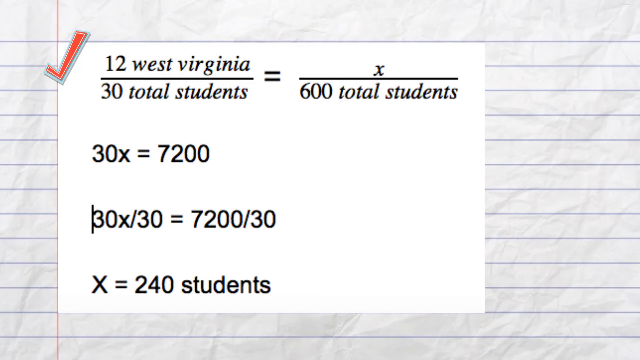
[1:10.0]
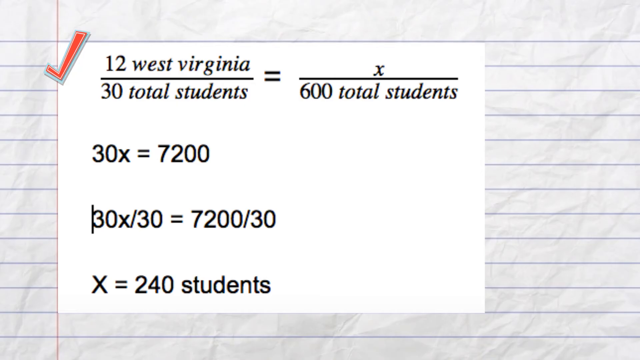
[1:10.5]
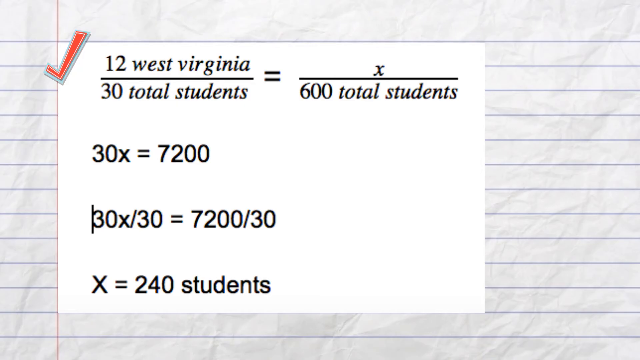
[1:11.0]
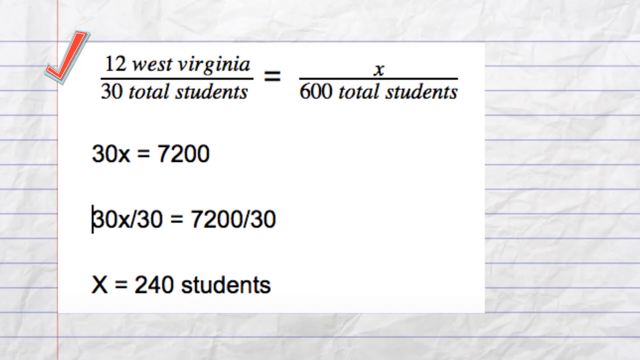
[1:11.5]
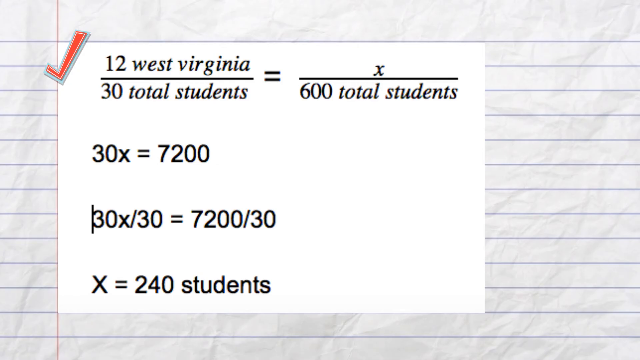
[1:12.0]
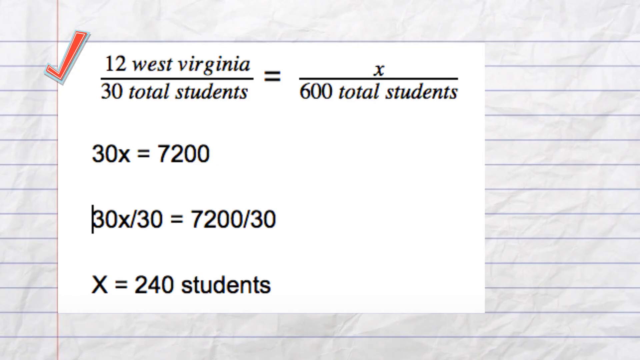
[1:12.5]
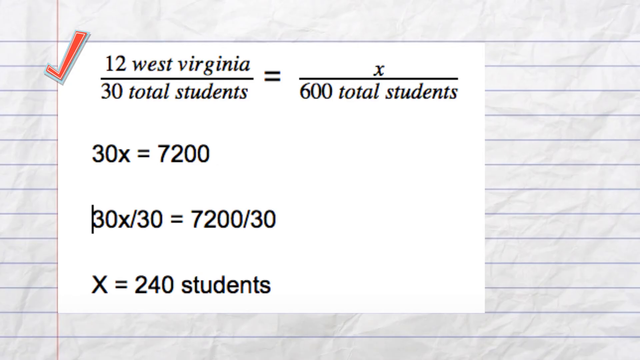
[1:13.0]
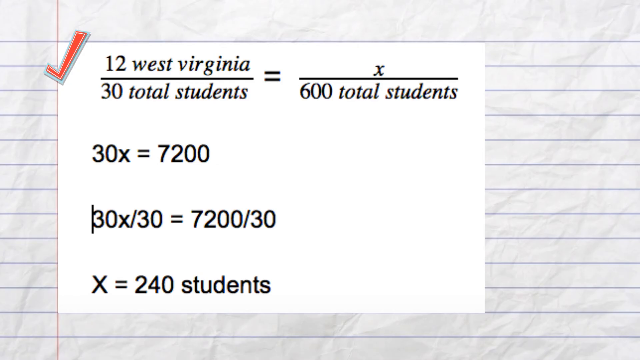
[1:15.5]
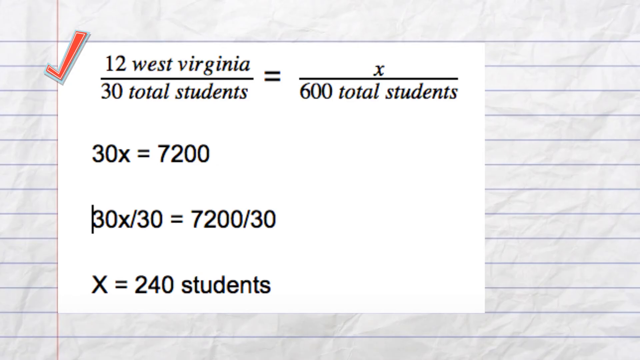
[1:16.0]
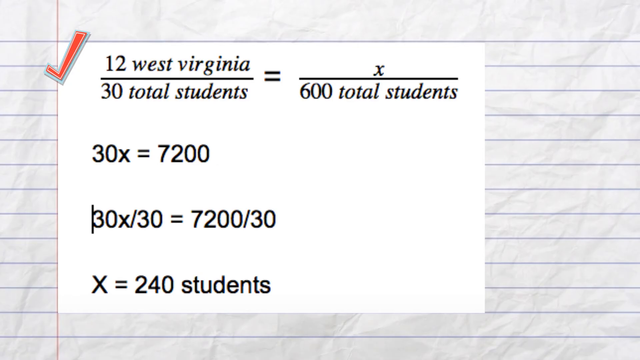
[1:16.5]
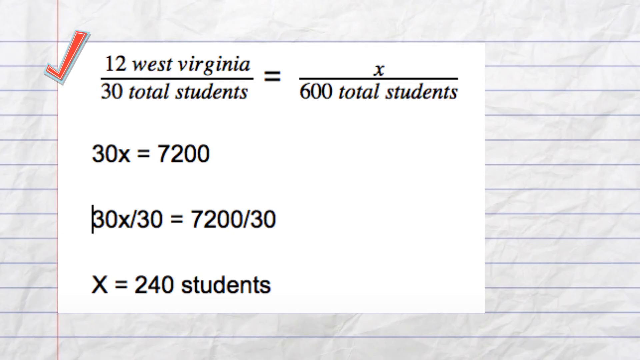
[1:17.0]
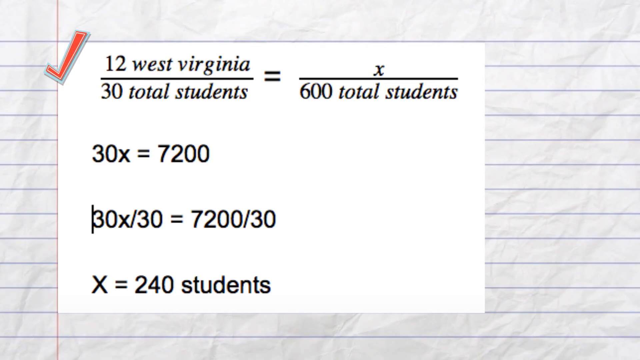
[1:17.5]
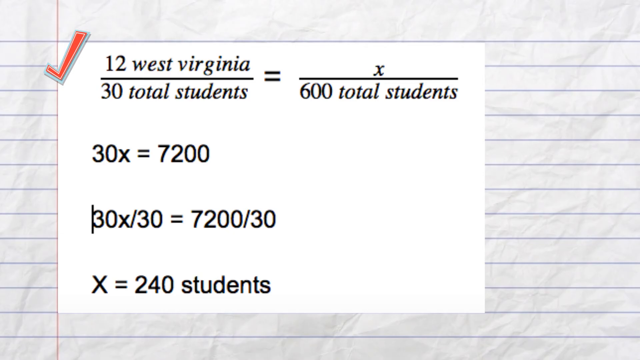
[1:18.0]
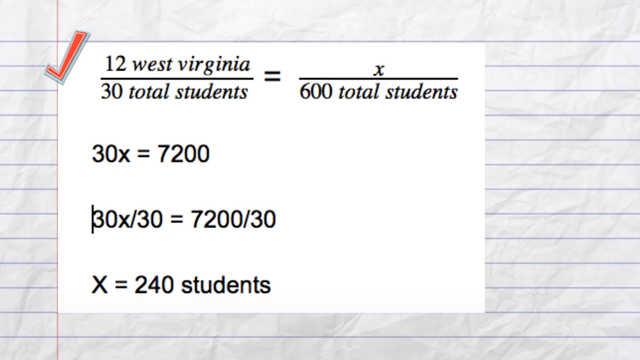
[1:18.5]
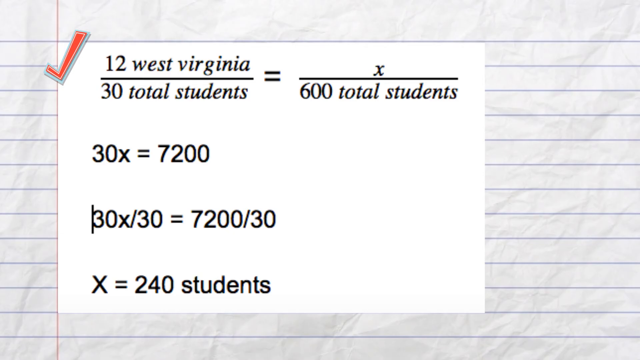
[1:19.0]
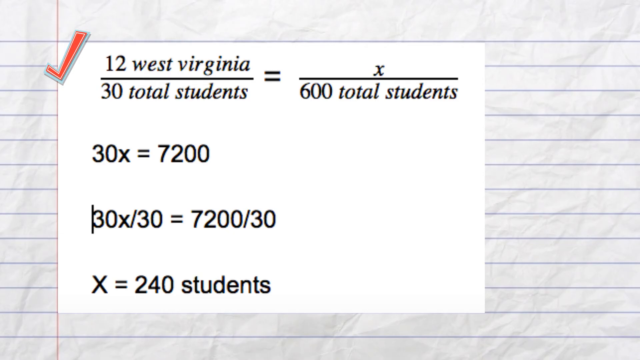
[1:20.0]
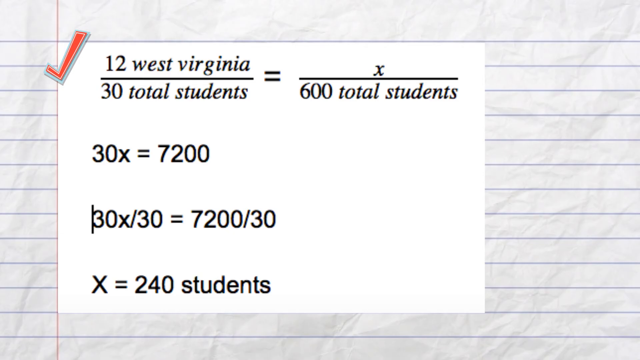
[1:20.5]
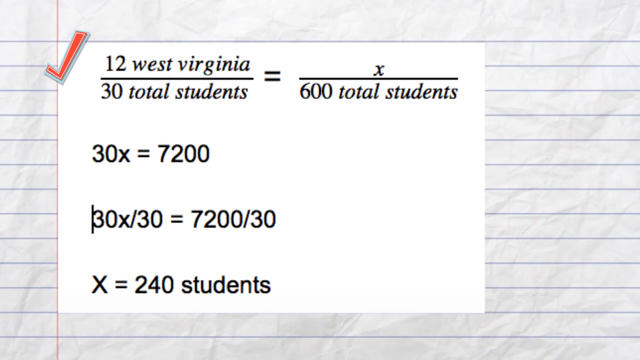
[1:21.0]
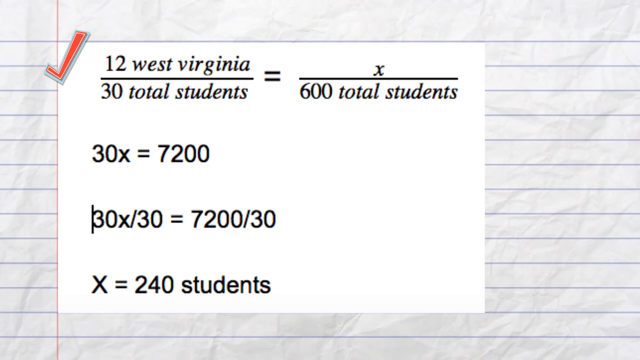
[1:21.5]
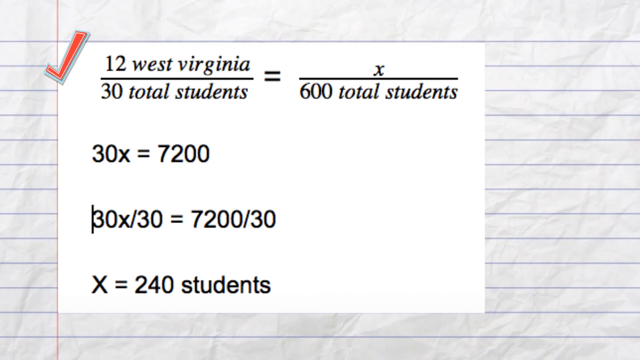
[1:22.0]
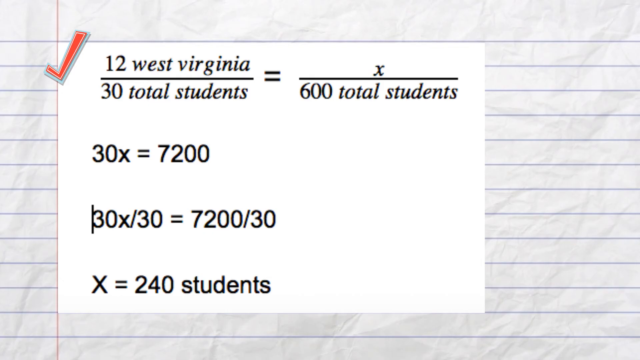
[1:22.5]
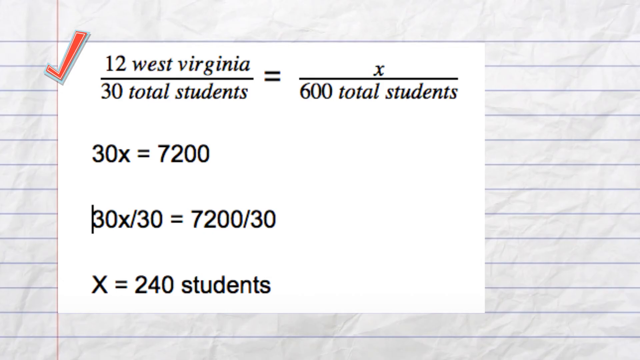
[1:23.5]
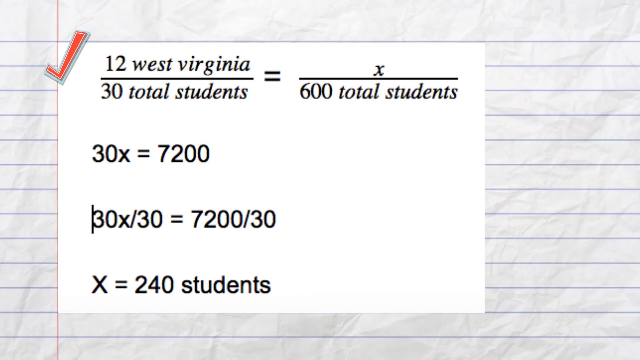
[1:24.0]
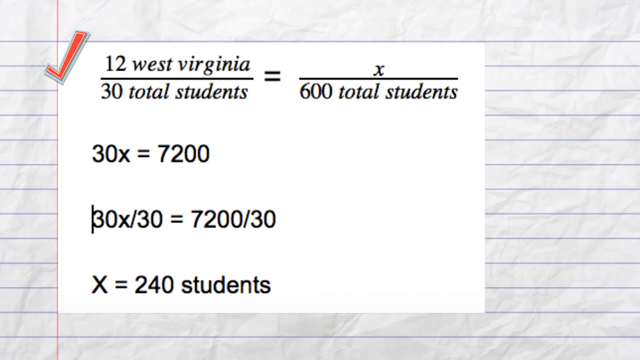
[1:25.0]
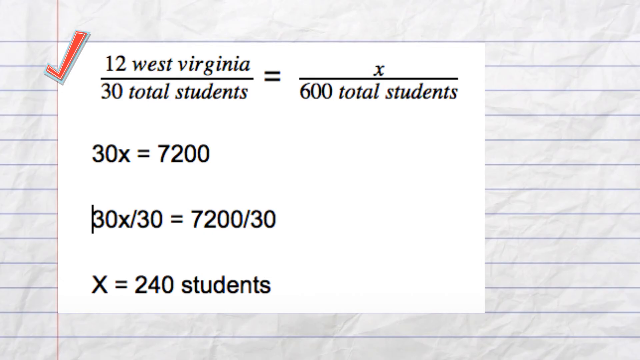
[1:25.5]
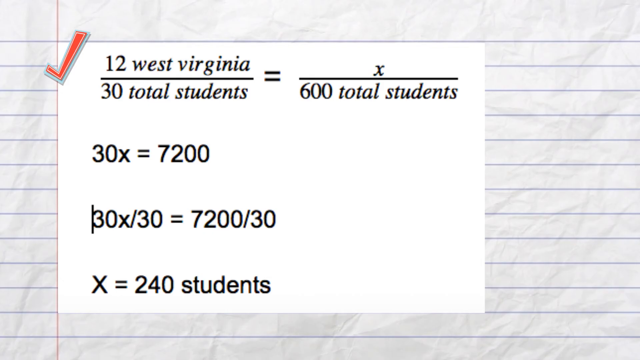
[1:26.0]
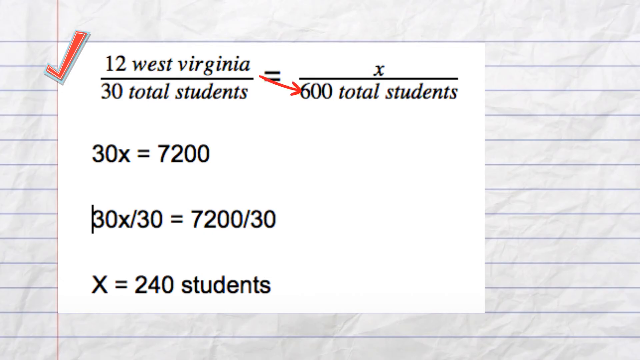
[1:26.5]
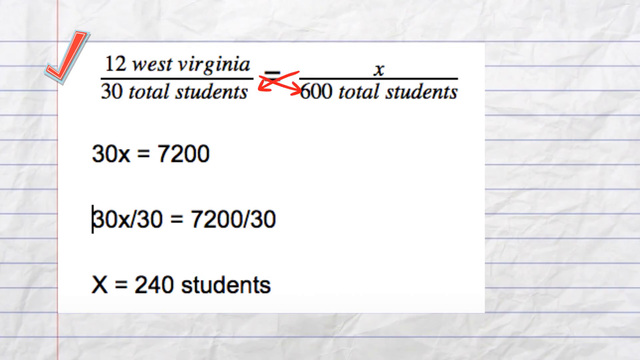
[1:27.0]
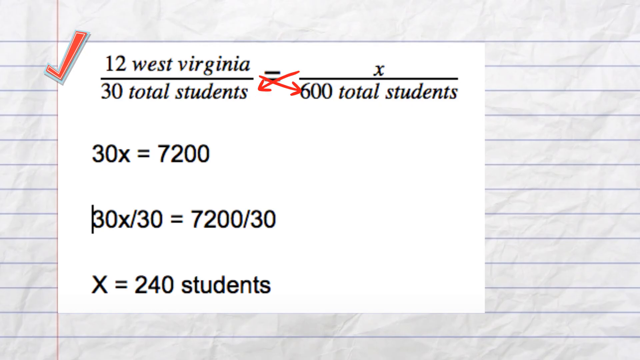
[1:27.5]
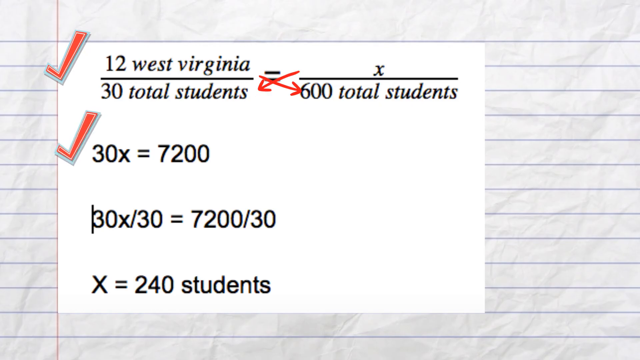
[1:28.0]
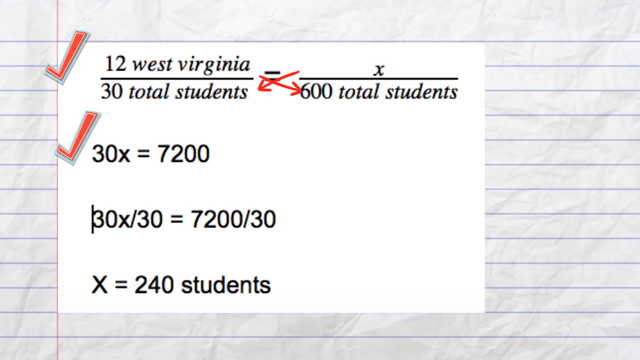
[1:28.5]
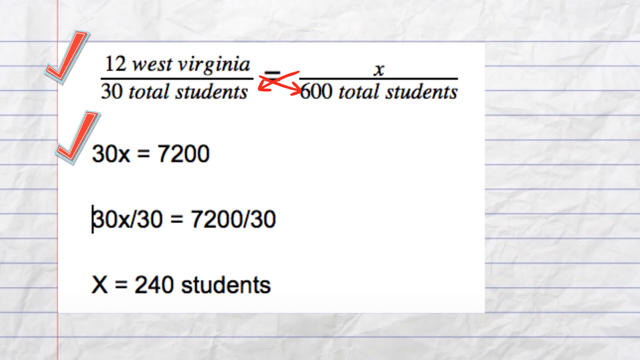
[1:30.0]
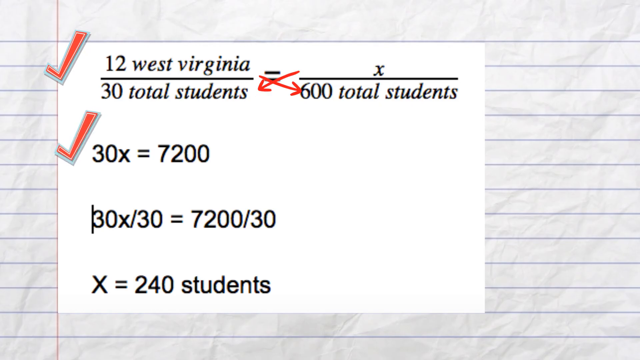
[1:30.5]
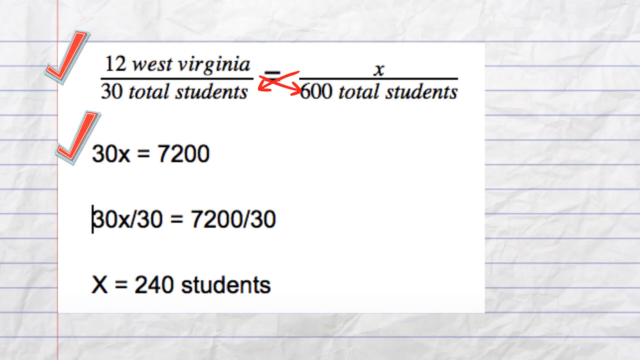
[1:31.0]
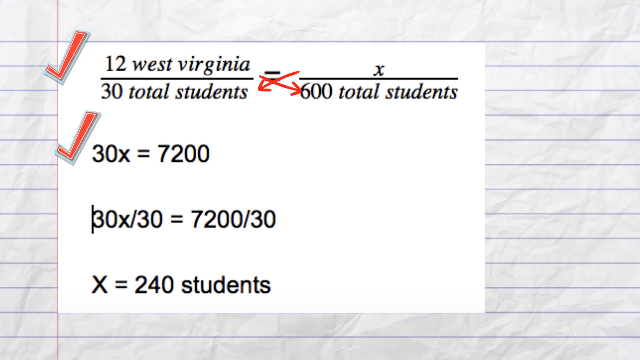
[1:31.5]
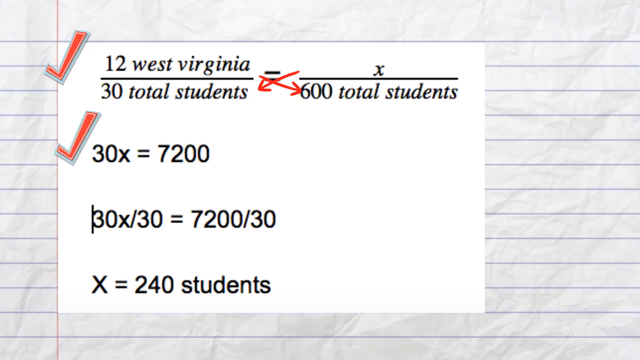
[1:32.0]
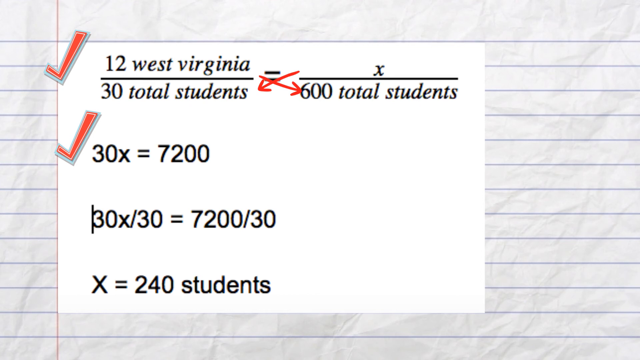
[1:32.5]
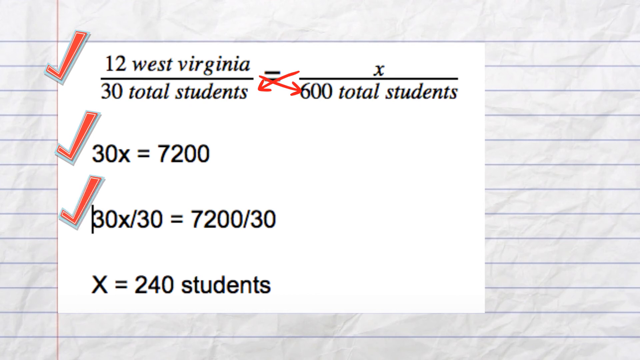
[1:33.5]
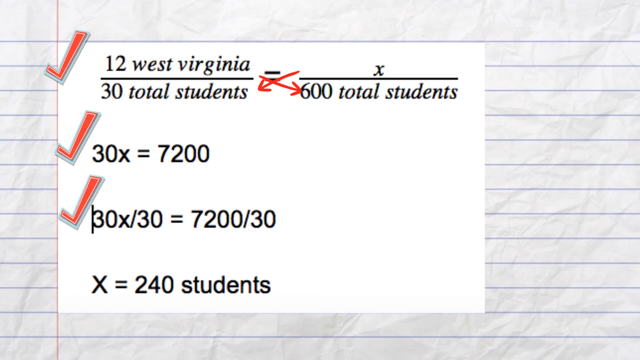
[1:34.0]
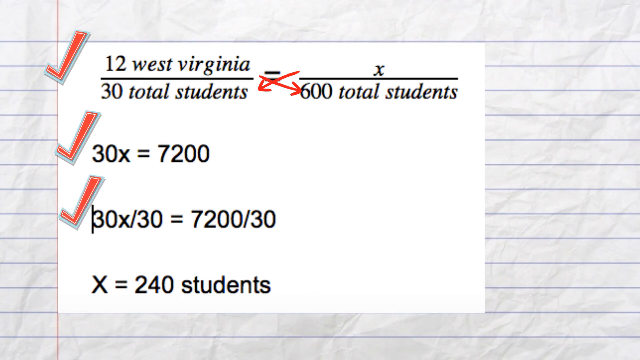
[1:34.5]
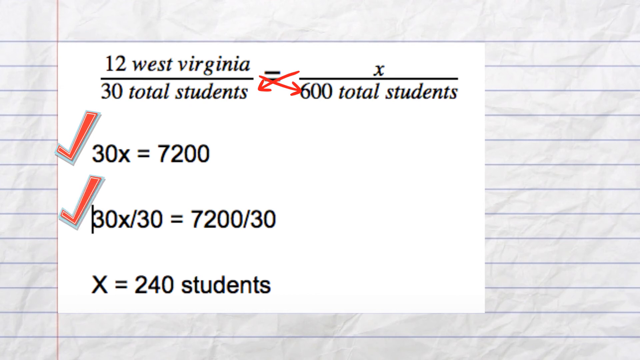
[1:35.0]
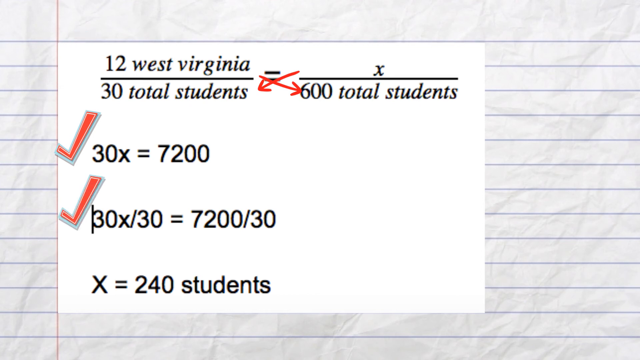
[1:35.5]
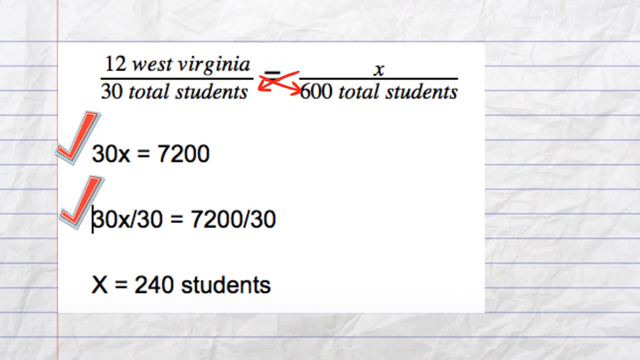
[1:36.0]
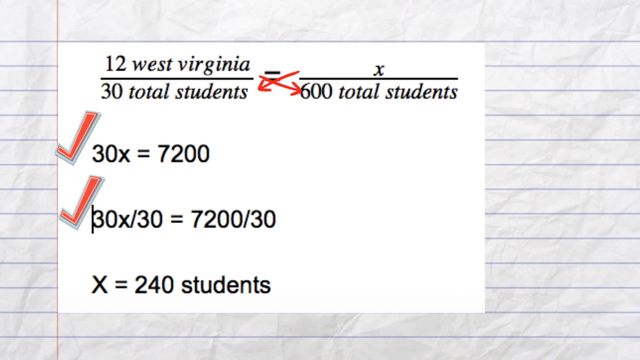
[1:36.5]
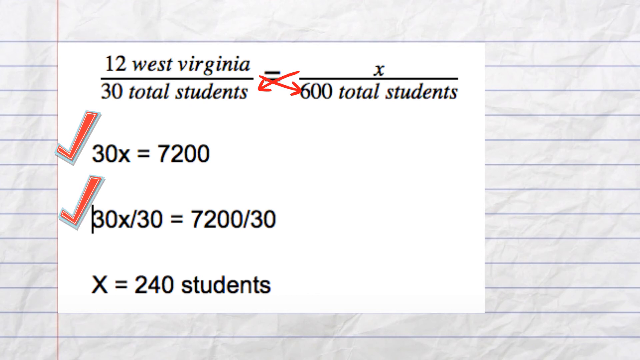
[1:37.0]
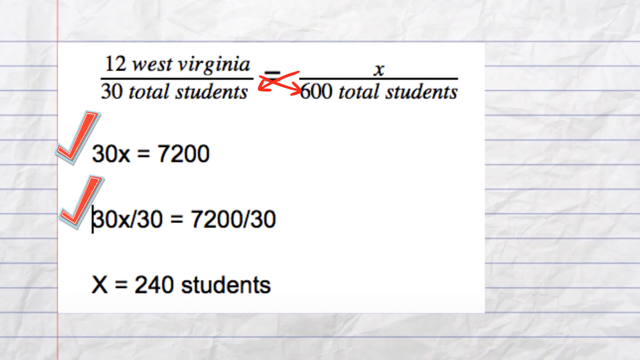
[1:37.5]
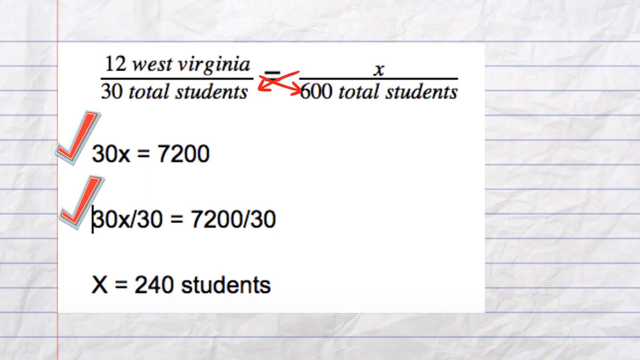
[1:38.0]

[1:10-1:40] An orange check mark appears by the ratio setup. Arrows show how the variable is isolated, with 600 multiplied by 12 on the other side of the equal sign, leading to the second line of the solution, 30x = 7200. Some time later, a check mark appears on the left of the third line, so the first, second and third lines are all check-marked. The work shows 30x divided by 30 on one side of the equal sign and 7,200 divided by 30 on the other. After a little more time, the final check mark appears next to x = 240 students.